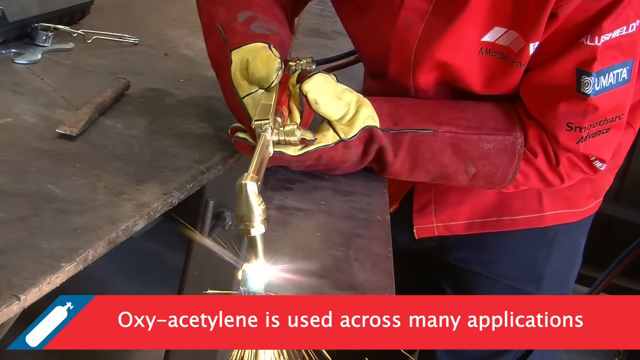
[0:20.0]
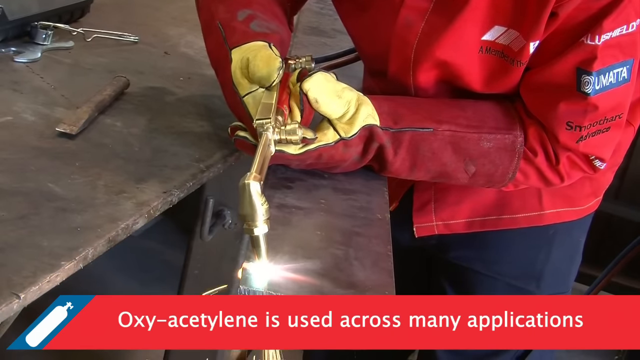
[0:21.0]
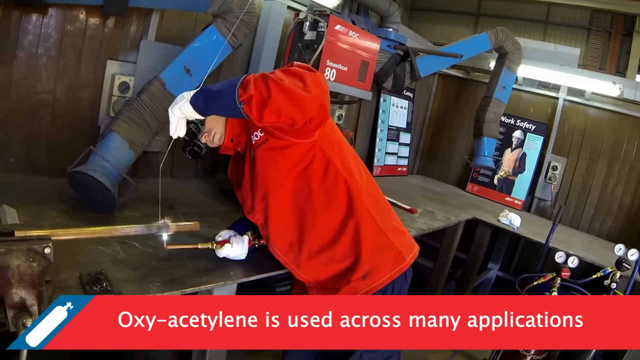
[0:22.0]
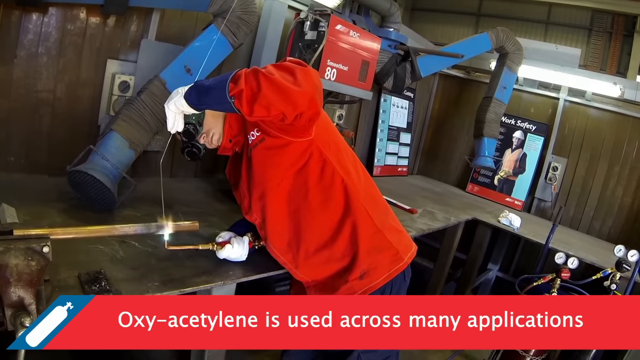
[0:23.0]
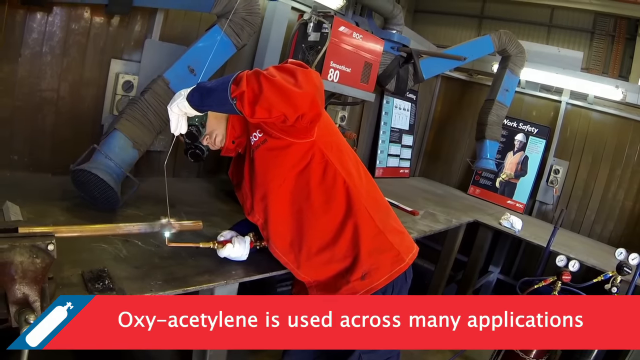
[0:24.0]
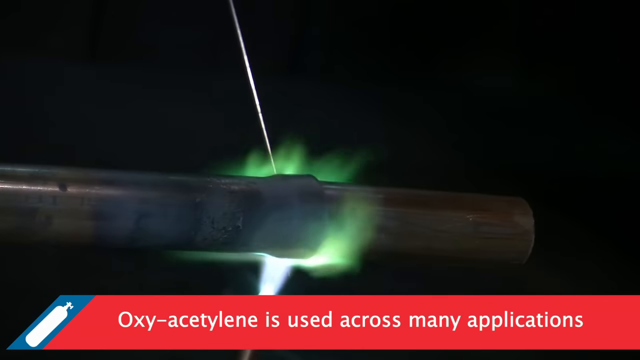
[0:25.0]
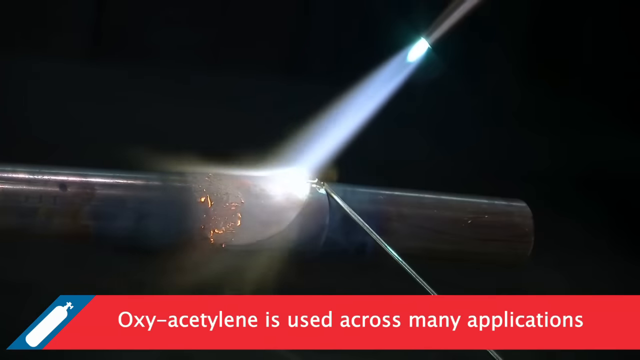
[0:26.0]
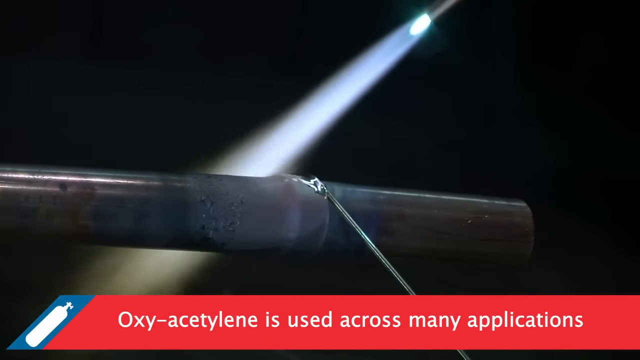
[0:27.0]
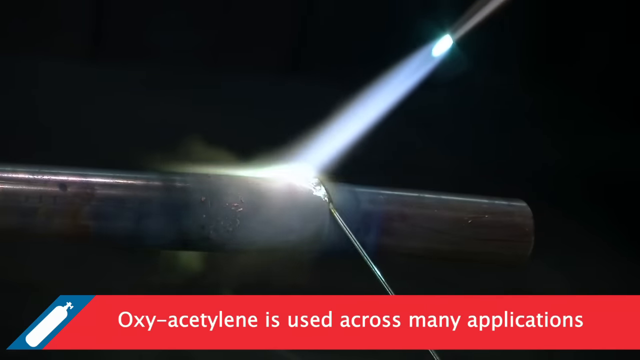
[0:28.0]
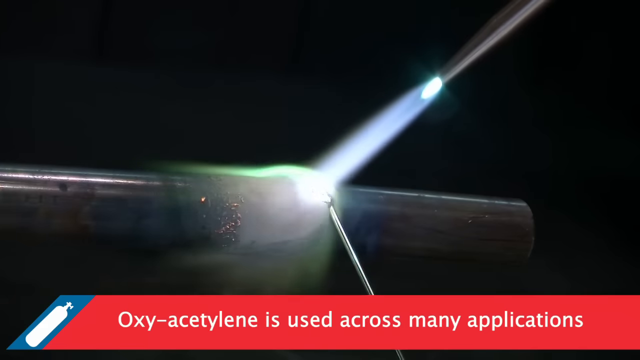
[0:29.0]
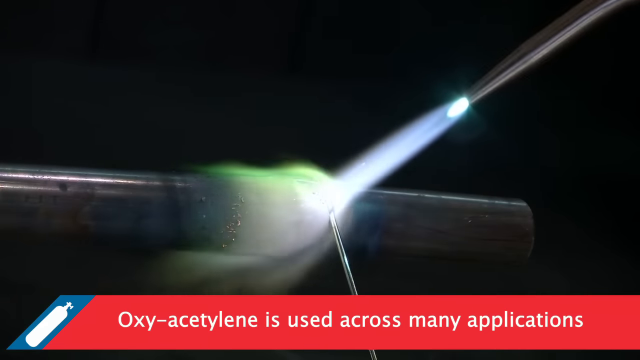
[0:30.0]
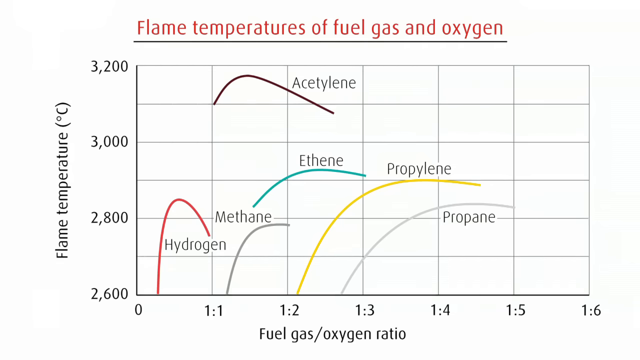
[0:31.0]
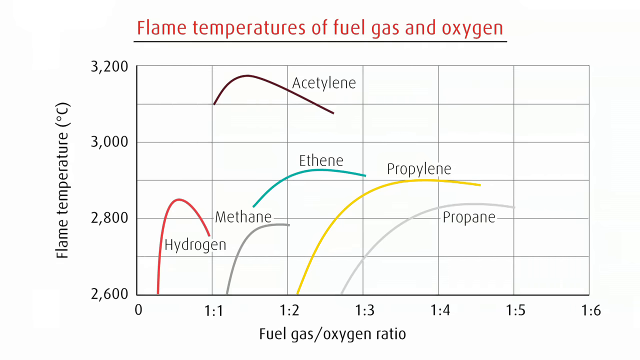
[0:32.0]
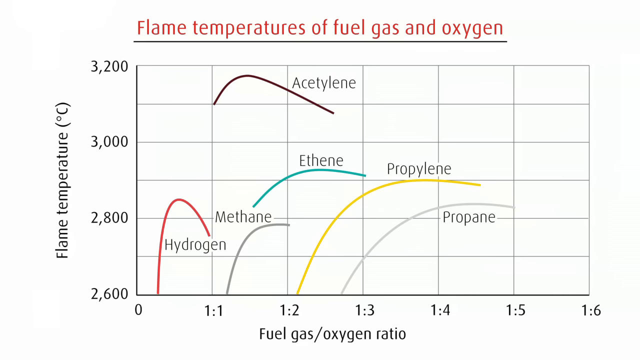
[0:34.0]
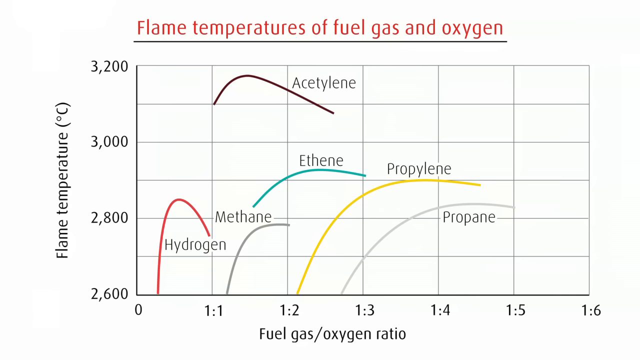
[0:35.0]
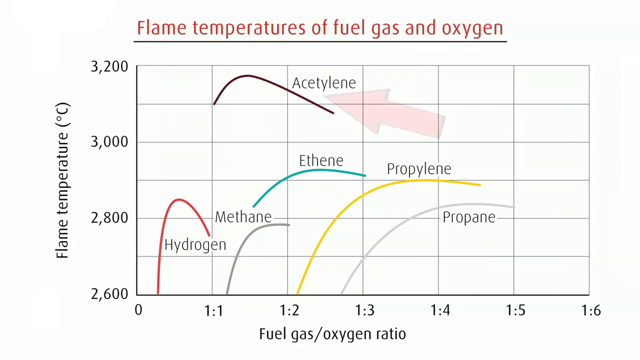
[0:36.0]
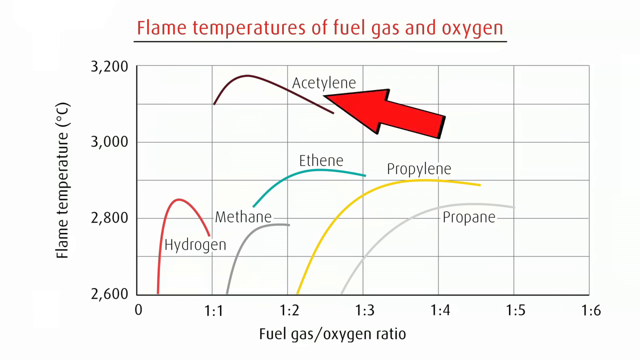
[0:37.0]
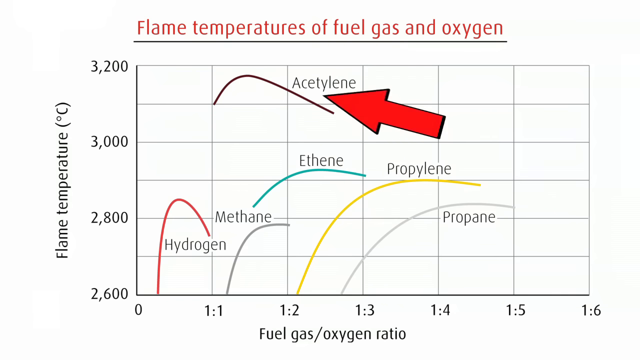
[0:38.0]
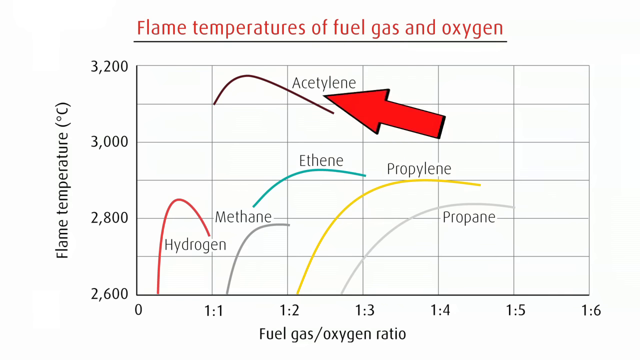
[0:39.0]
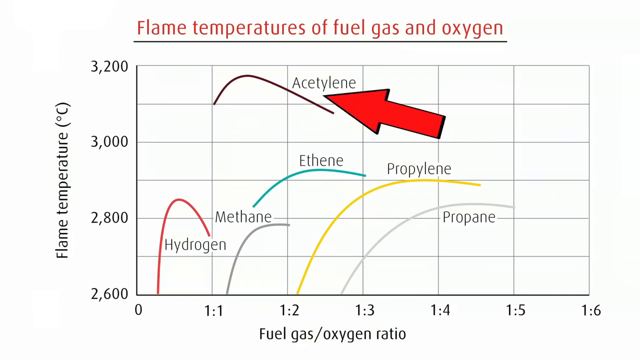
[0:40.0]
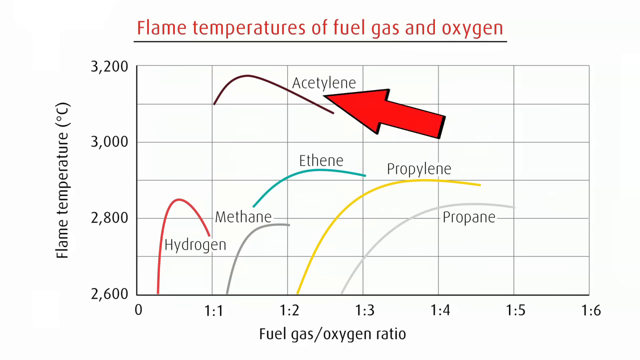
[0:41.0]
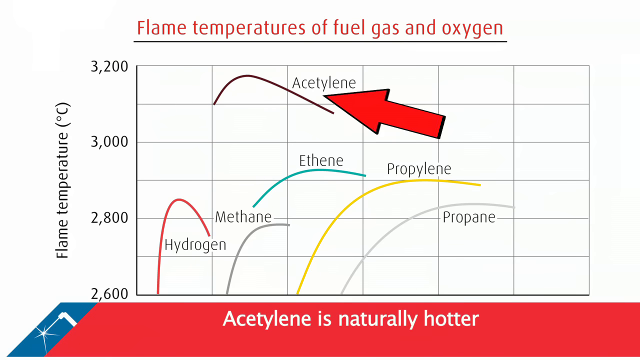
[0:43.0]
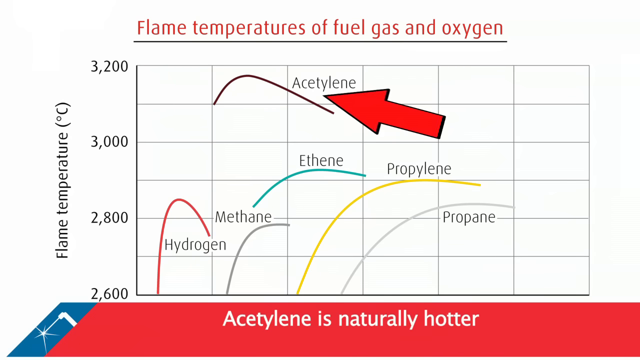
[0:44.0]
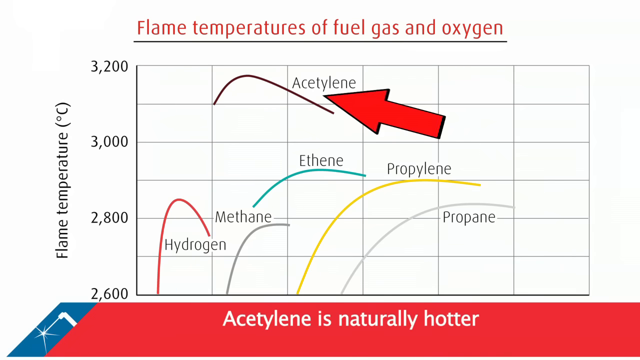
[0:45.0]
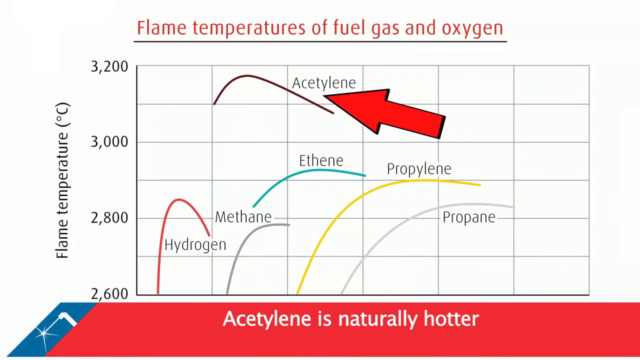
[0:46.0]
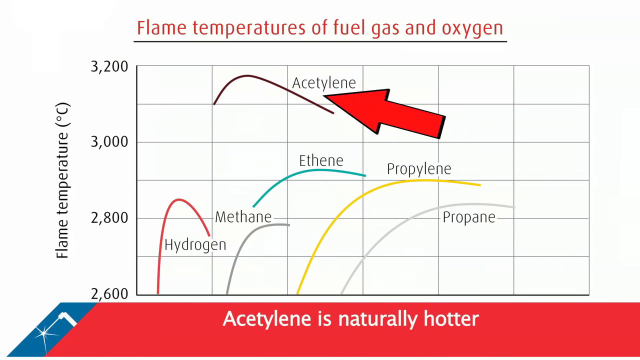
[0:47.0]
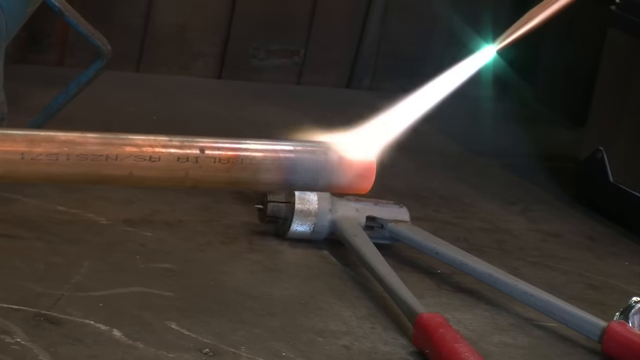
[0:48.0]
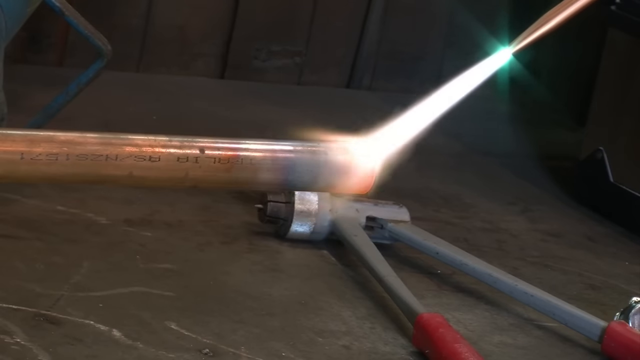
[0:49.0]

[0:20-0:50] A person in a red jacket, apparently a protective jacket, wears red and yellow gloves and holds some type of welding torch. Next, they use the torch on something held in their left hand, with equipment in the background. A close-up shows the torch on a piece of what looks like pipe. A graph follows, titled "flame temperatures of fuel gas and oxygen," with "flame temperature" in Celsius on the left-hand side. The gases listed are hydrogen, methane, ethane, propylene, propane, and, at the very top, acetylene, which is the highest. The fuel gas and oxygen ratio runs along the bottom from zero to 1.6. A red banner pops up reading "acetylene is naturally hotter." The torch is then used on a long copper pipe.